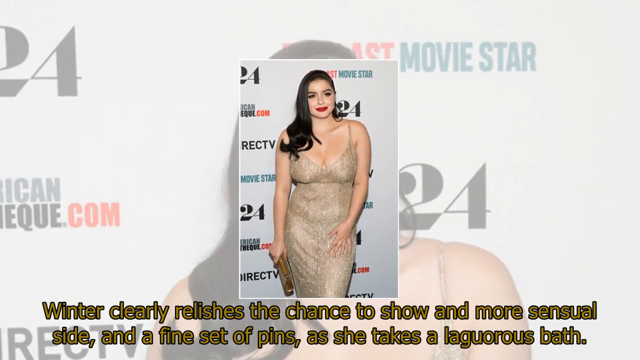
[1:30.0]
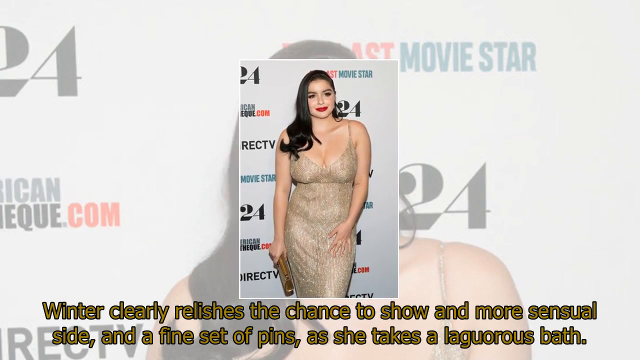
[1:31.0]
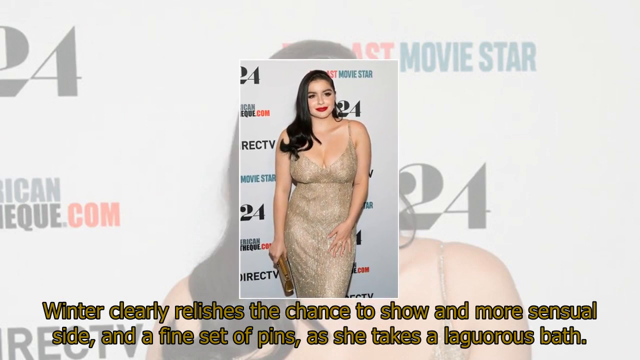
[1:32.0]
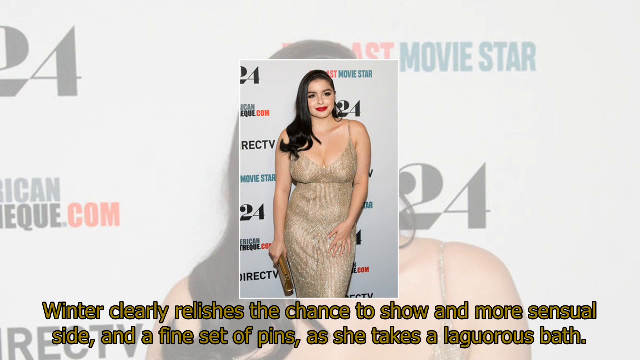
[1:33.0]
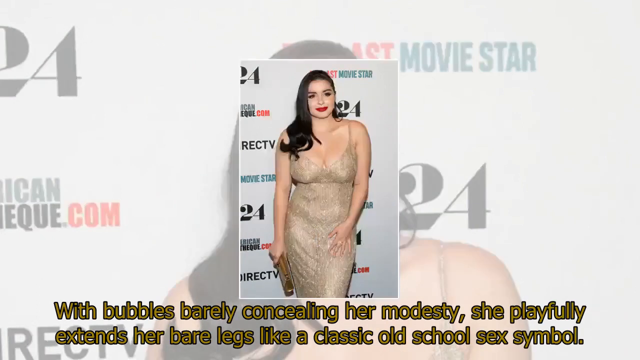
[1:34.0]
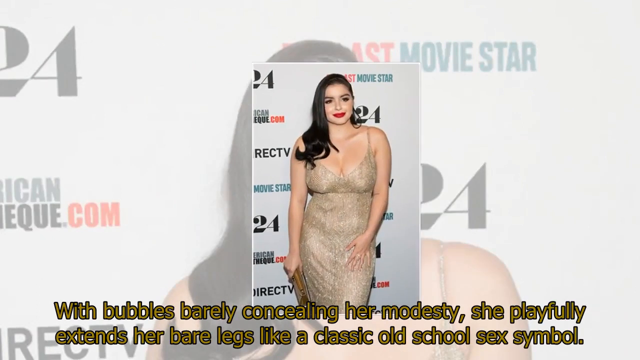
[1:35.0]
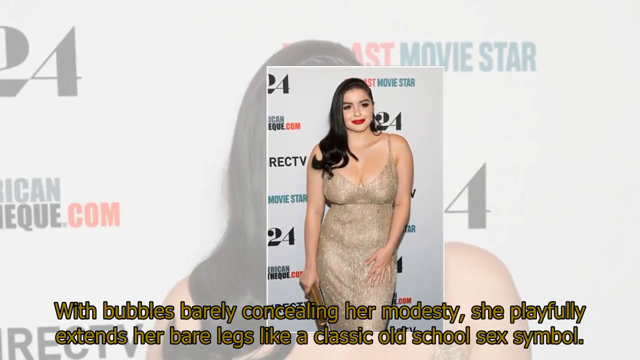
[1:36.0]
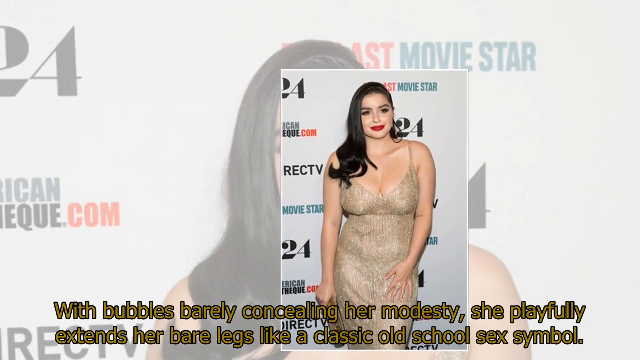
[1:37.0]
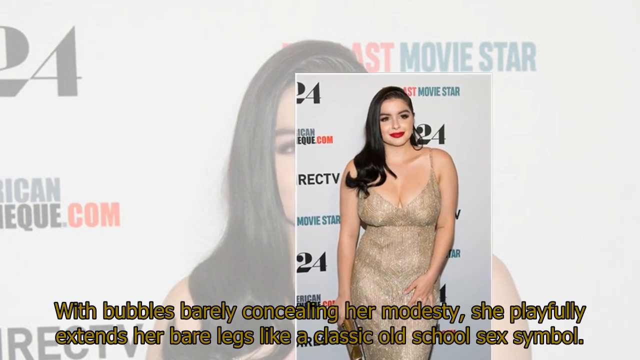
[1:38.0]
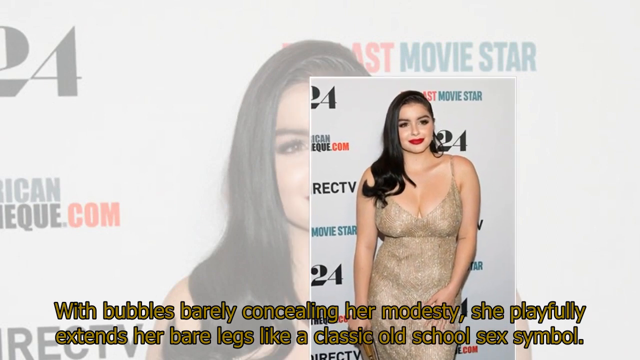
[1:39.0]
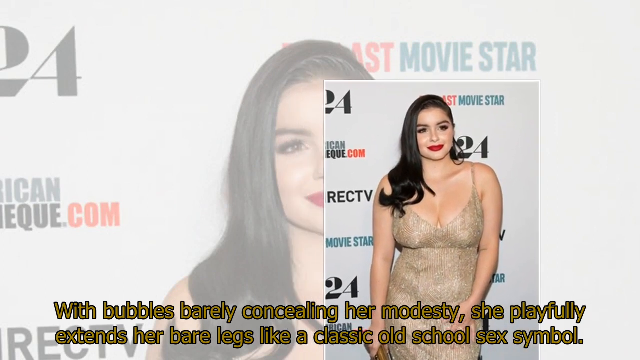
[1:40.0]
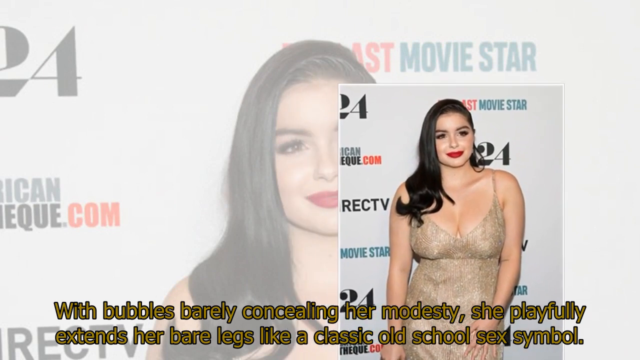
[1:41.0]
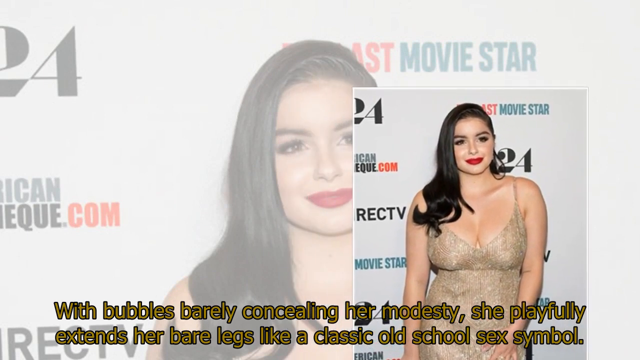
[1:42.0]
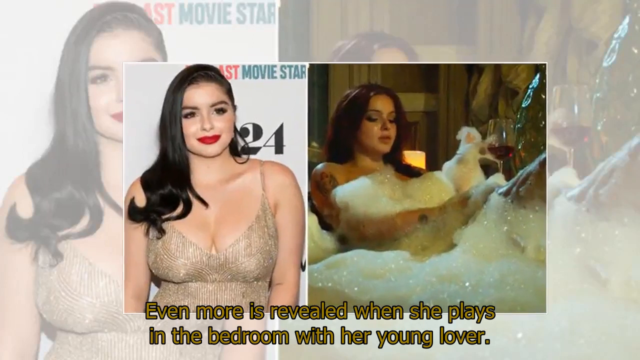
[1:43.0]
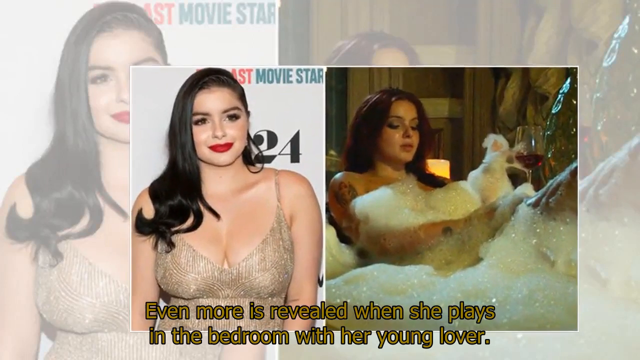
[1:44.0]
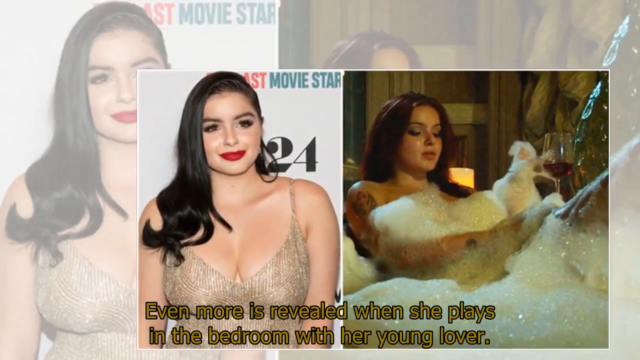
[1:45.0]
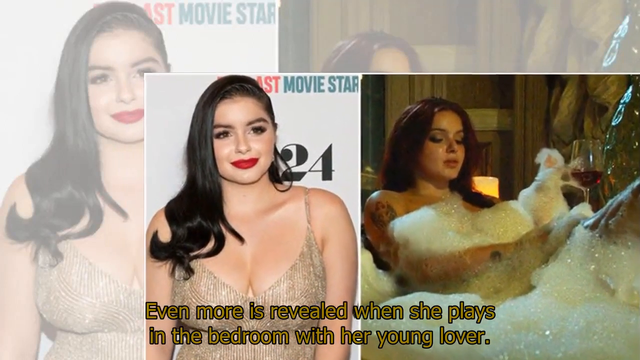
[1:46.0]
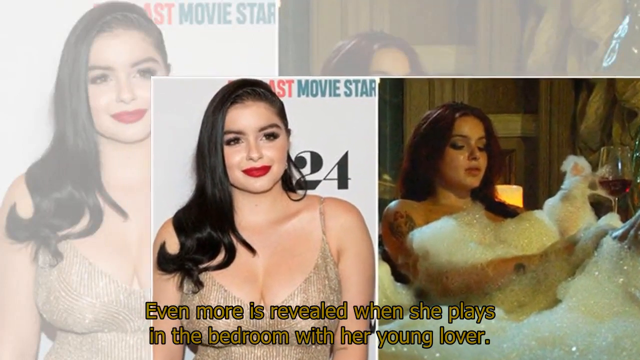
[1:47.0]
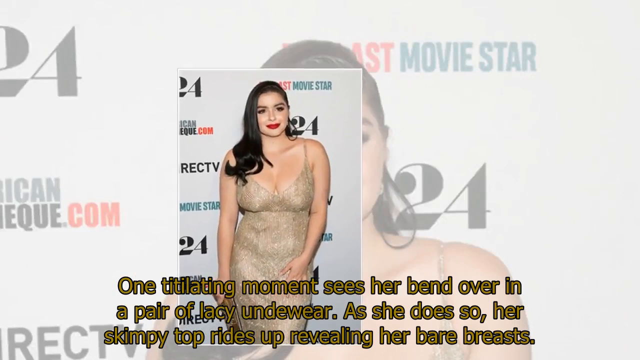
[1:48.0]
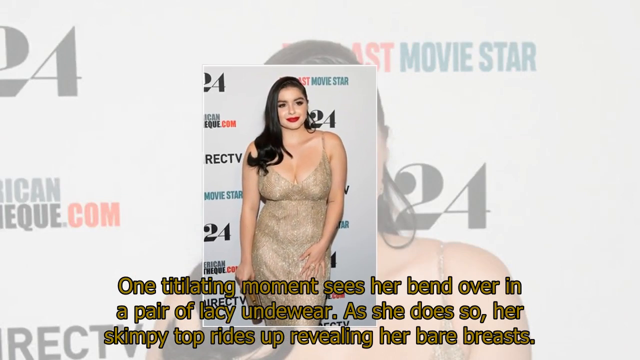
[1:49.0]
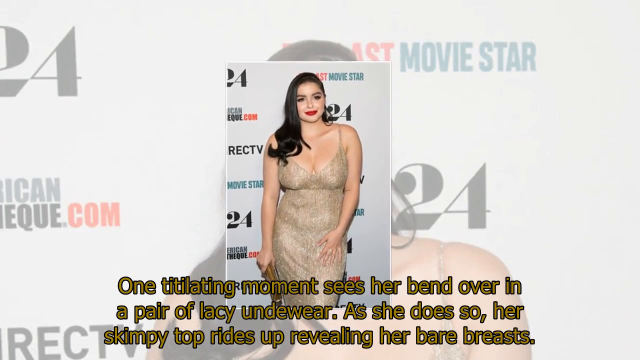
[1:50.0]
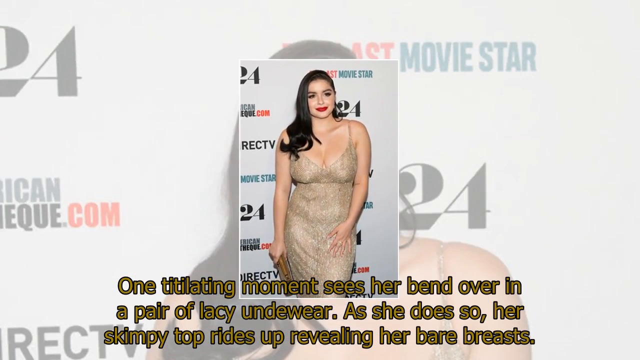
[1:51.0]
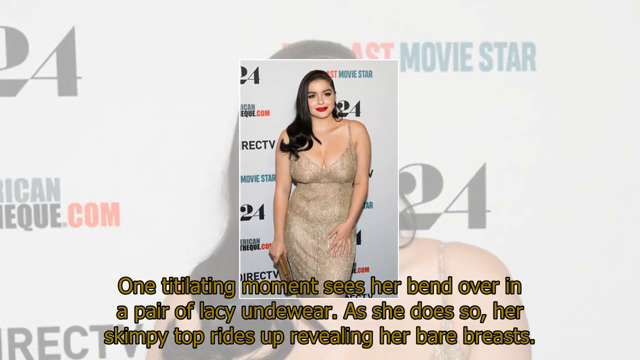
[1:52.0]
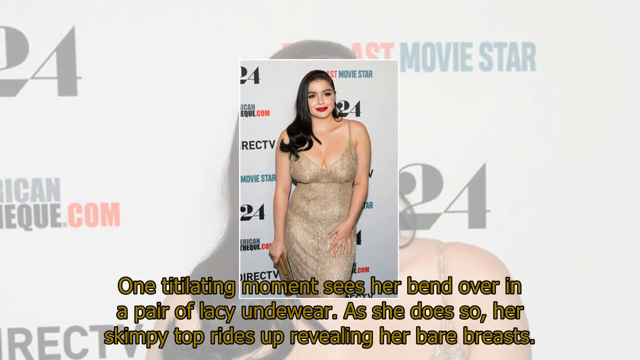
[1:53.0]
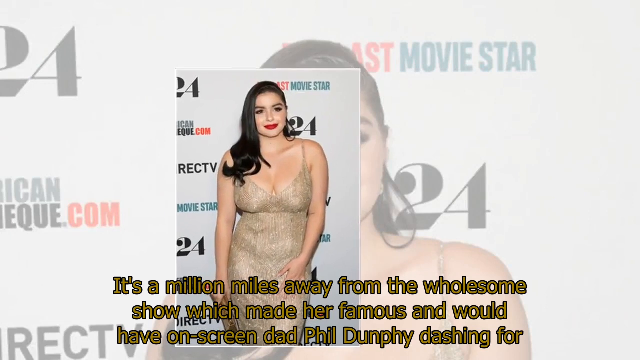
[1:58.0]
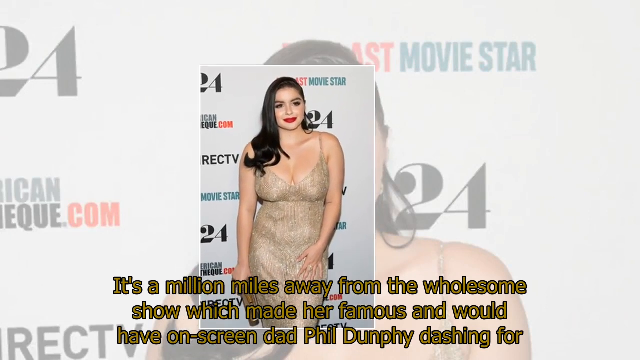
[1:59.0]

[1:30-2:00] Text continues to describe her provocative scenes: a bath in which the bubbles barely conceal her as she extends her bare legs, and a bedroom scene with her young lover in which she is bent over in lacy underwear.